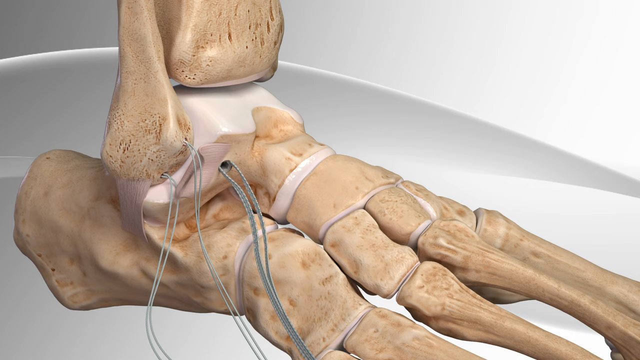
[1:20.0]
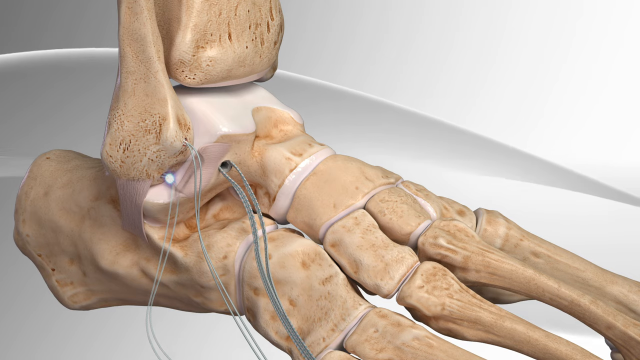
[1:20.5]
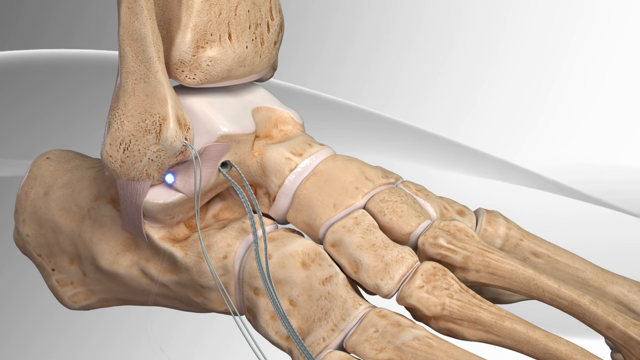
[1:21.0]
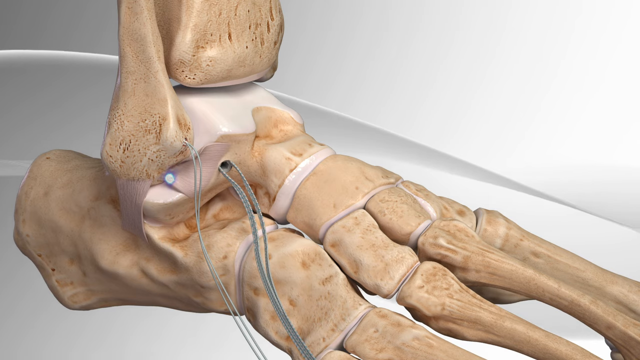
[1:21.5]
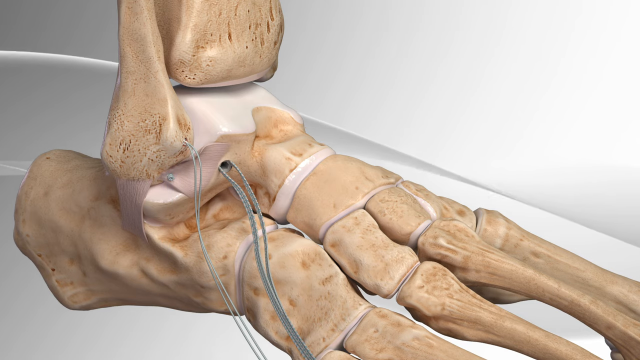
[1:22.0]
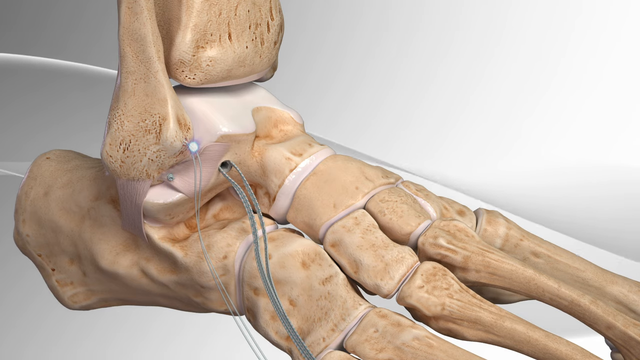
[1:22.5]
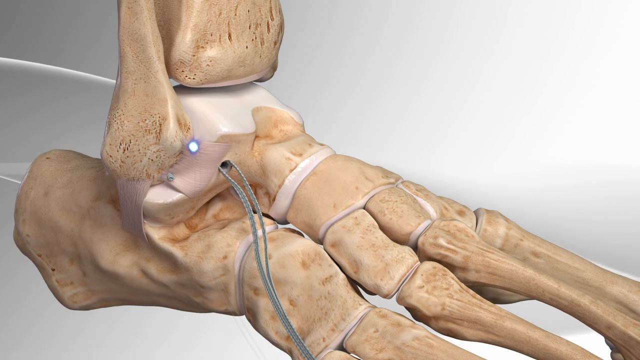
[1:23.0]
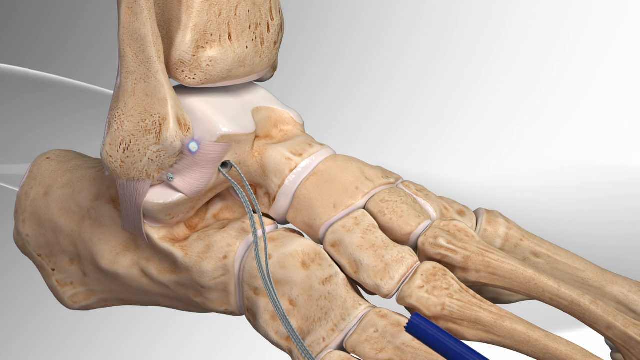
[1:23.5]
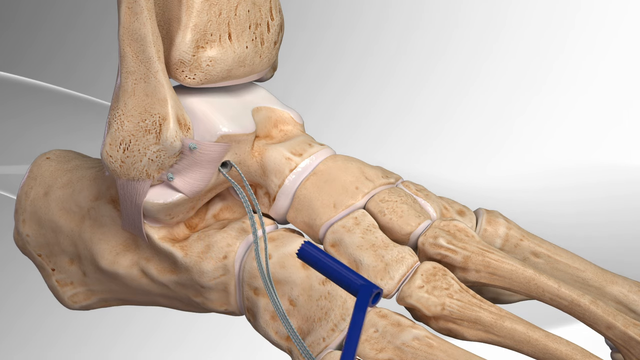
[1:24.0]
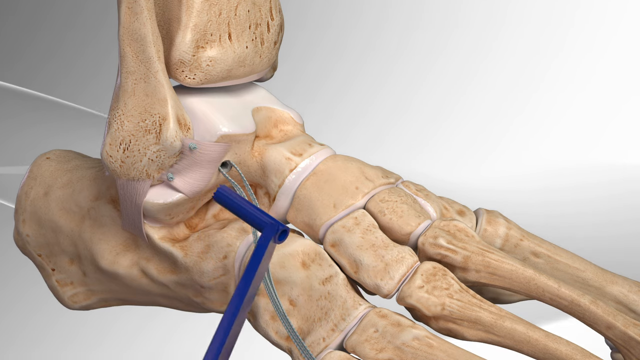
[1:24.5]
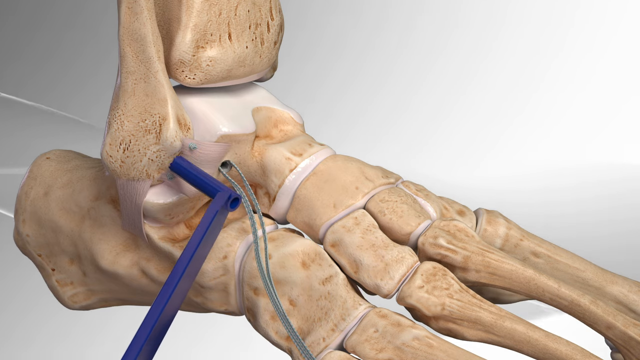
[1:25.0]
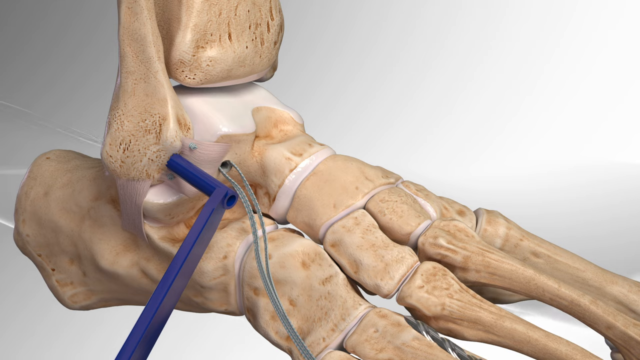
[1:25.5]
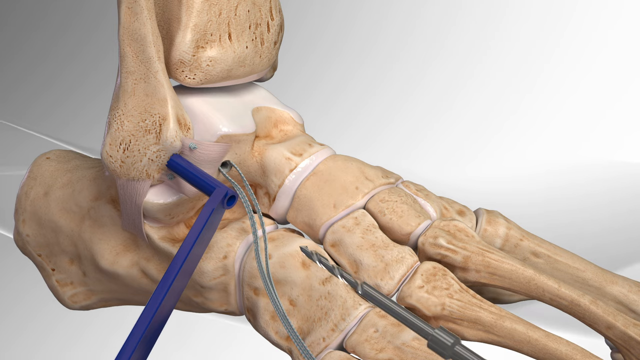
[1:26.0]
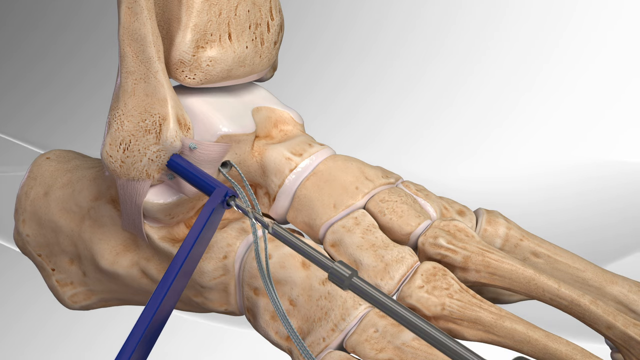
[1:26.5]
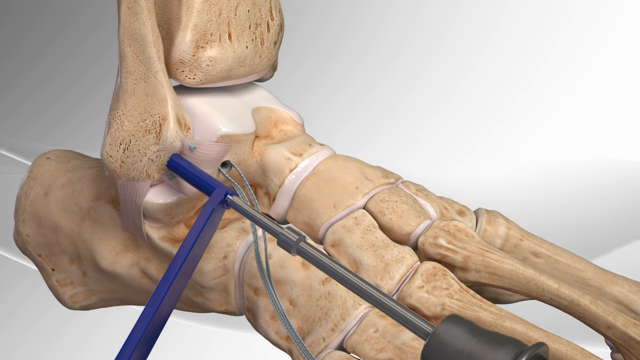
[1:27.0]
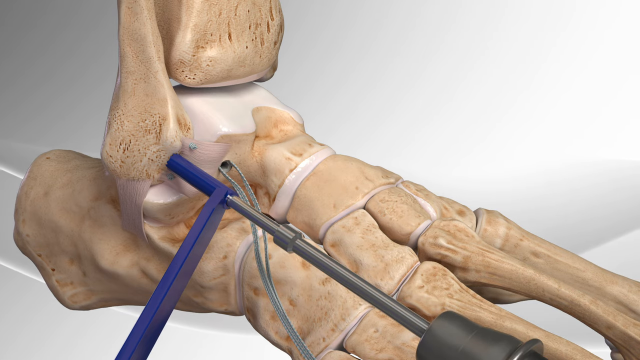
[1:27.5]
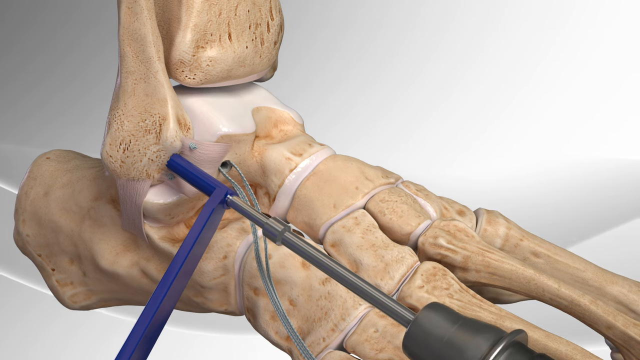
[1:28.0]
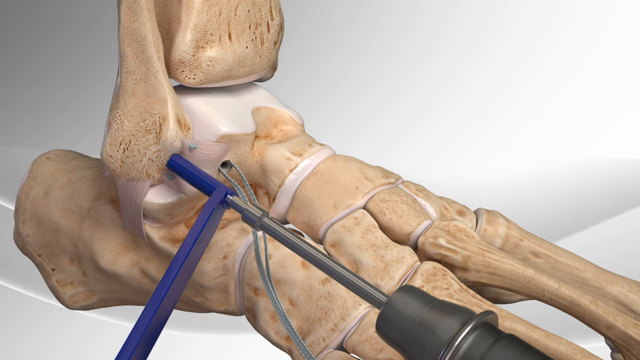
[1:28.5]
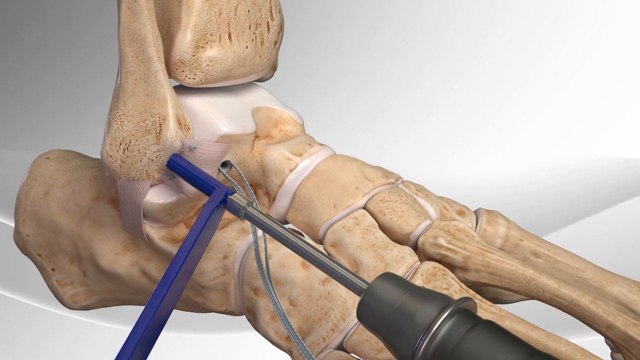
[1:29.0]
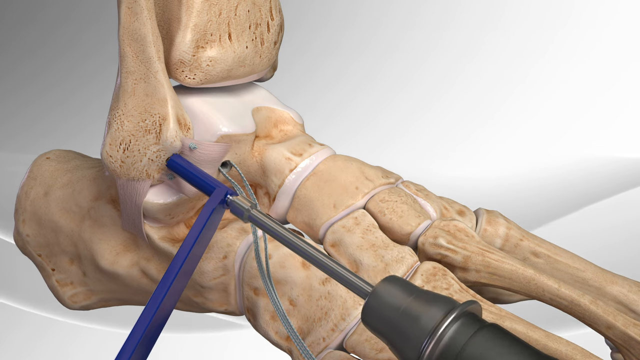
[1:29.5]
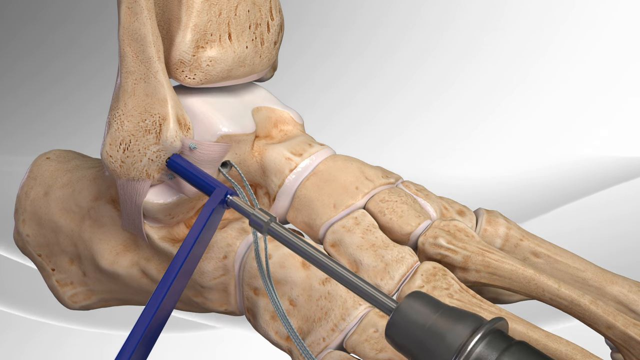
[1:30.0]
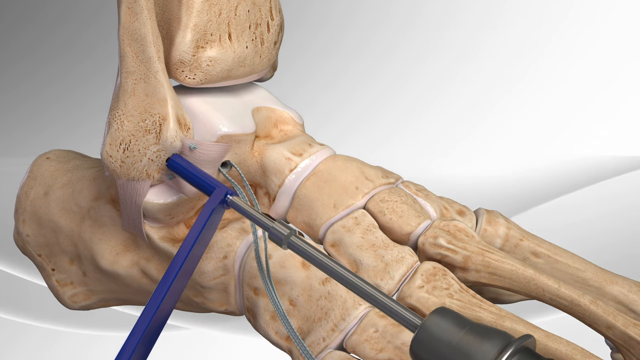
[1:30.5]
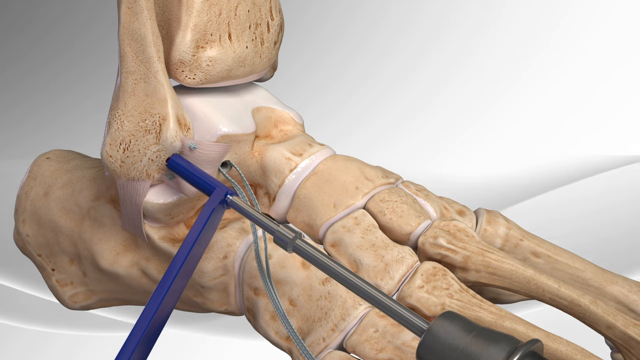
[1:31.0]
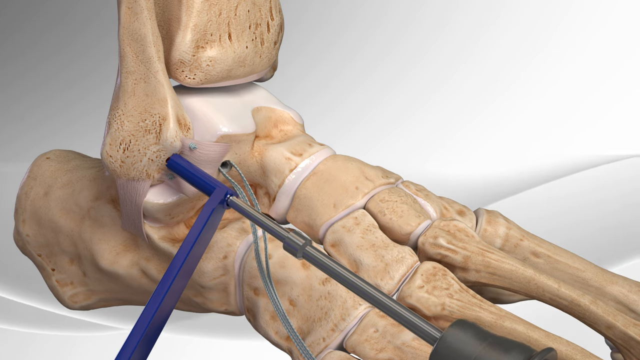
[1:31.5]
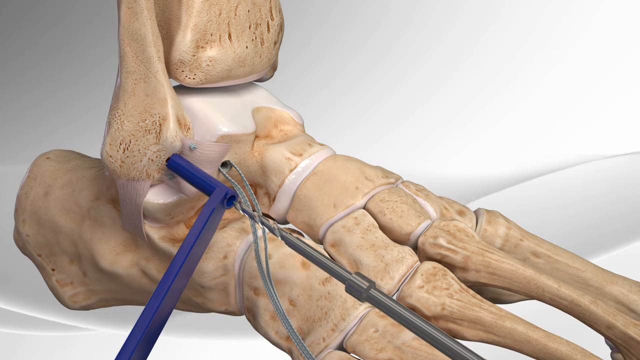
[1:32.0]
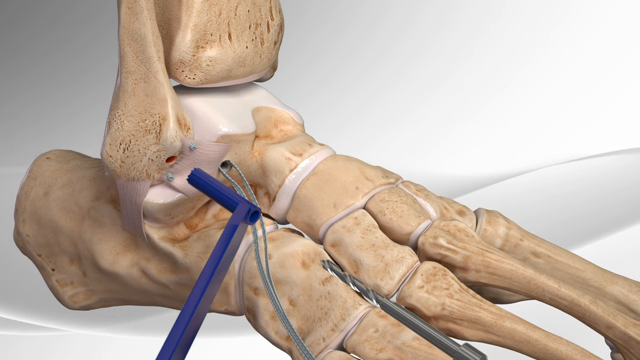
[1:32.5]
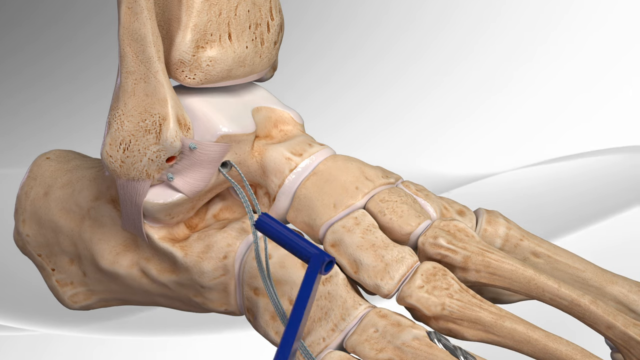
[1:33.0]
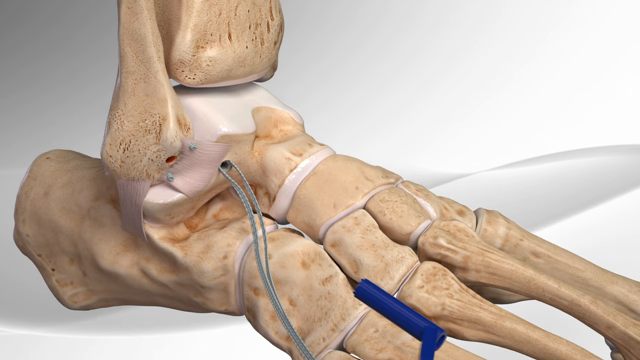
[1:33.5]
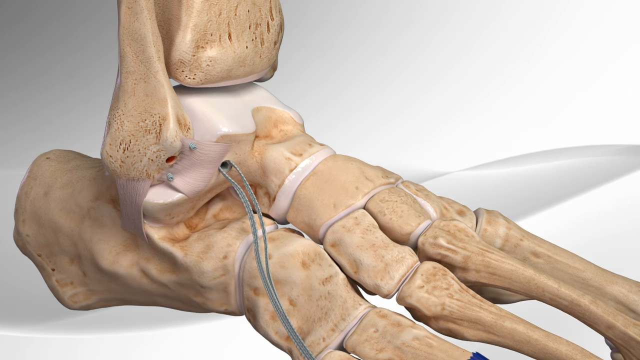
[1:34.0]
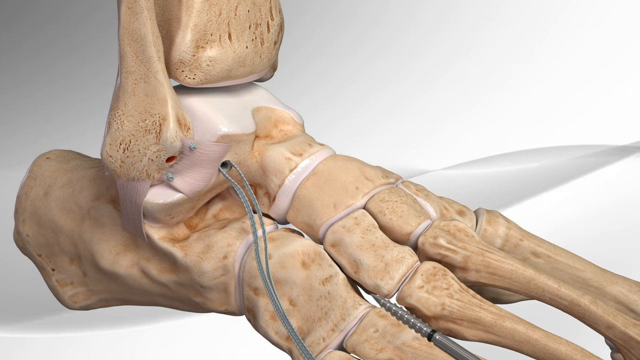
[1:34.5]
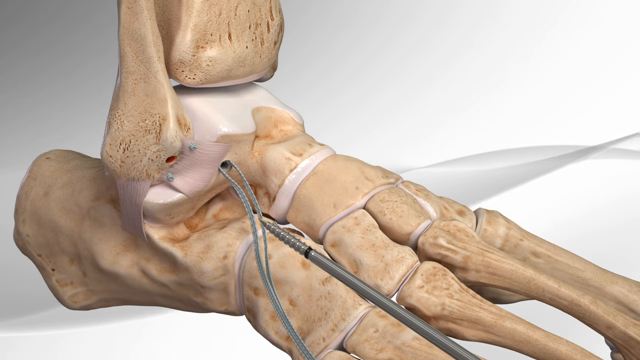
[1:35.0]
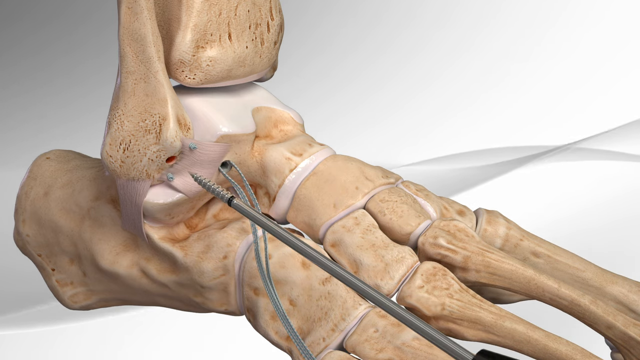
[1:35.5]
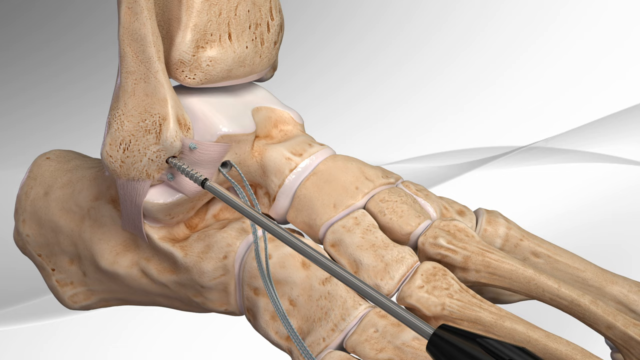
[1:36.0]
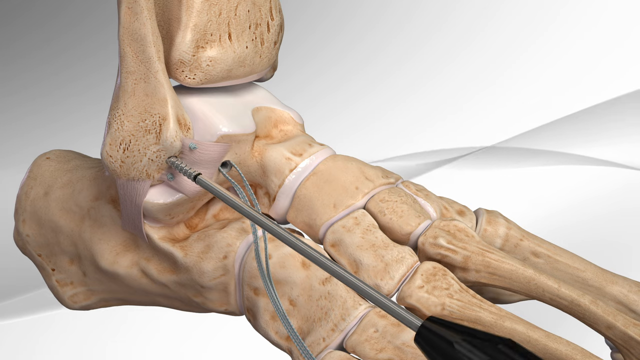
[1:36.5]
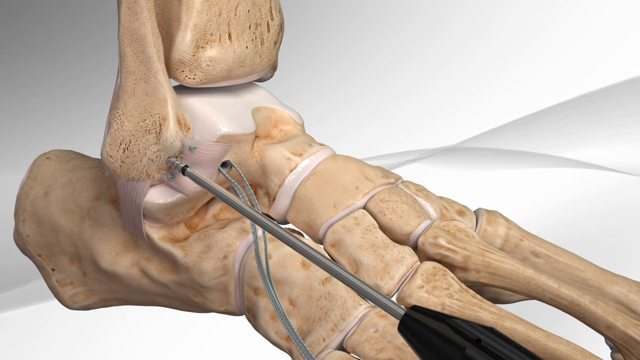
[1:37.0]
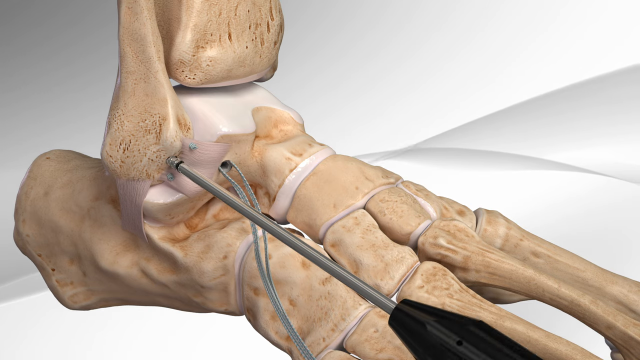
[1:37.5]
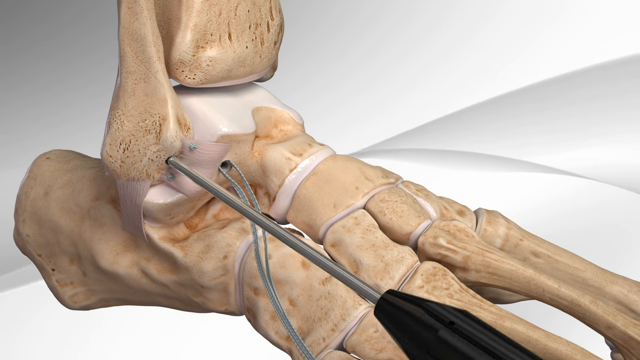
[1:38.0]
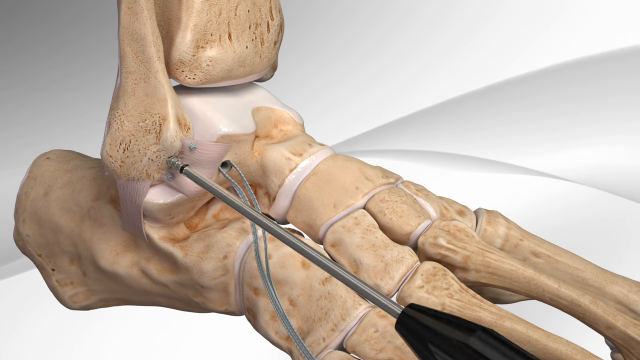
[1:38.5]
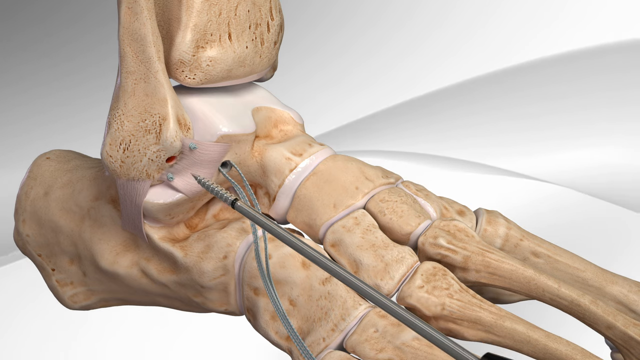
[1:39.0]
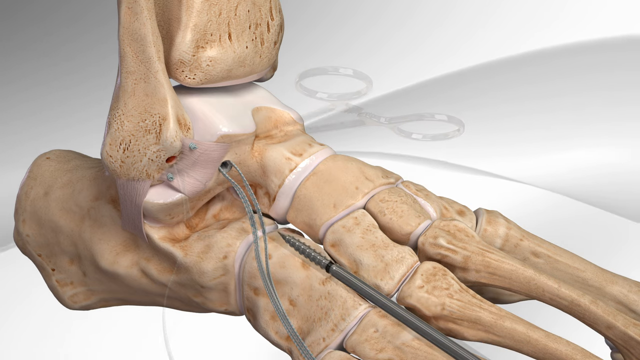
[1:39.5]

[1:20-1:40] The three holes are shown with wires coming out of each of them. At the first hole that was drilled, the wires disappear, and a little white circle outlined in blue kind of highlights the area. The same happens at the second hole: the wires disappear, leaving just a little white circle. Possibly pins are being put in, as it kind of shows the little end of a pin. The hollow instrument with the drill then comes in between the first two holes and drills a new hole. Another instrument that looks like a screwdriver goes into that hole and kind of bores it out a little more. Hemostats appear very briefly.